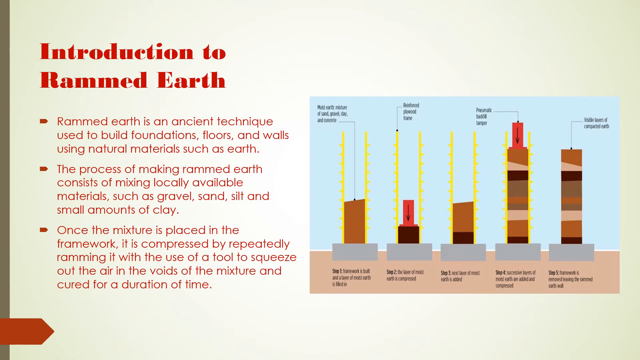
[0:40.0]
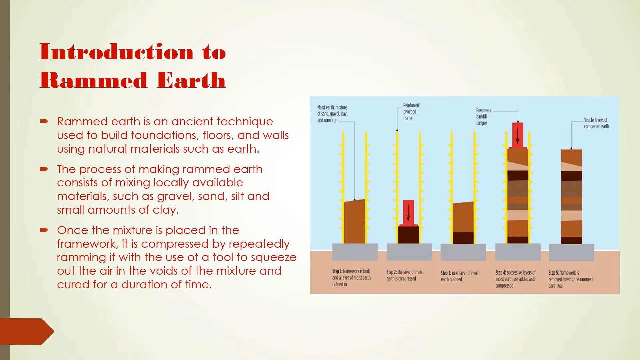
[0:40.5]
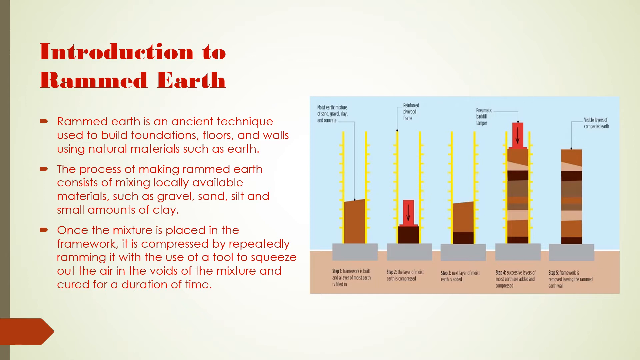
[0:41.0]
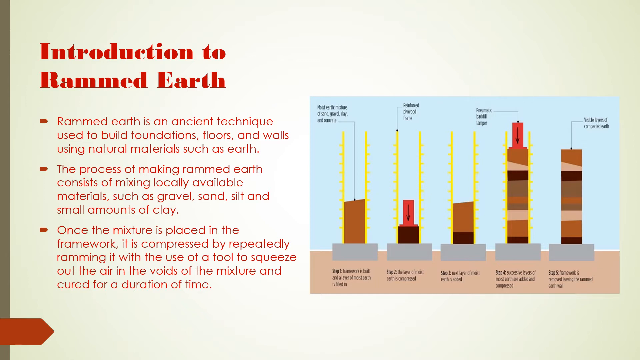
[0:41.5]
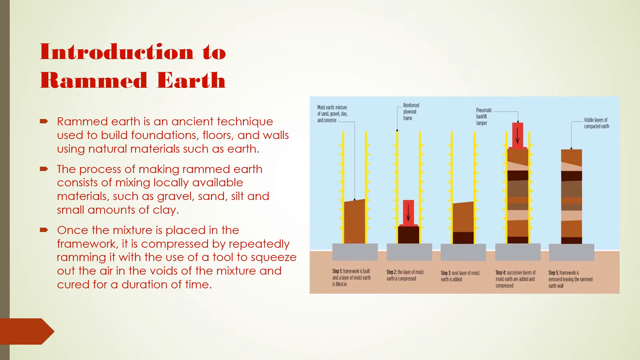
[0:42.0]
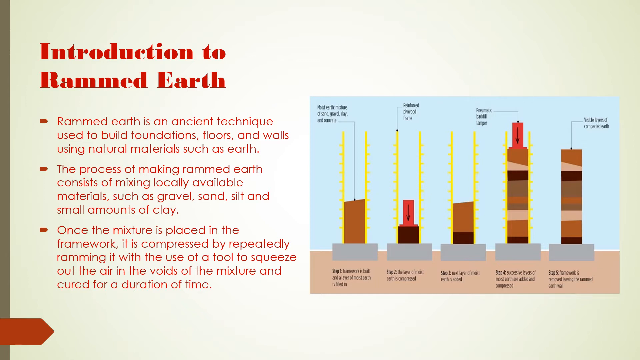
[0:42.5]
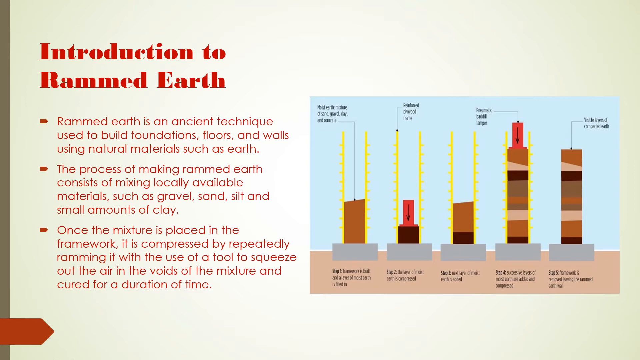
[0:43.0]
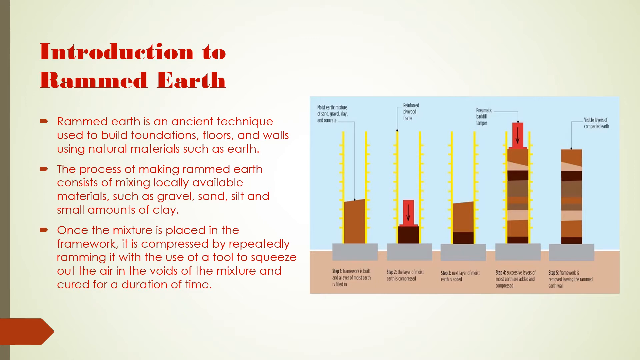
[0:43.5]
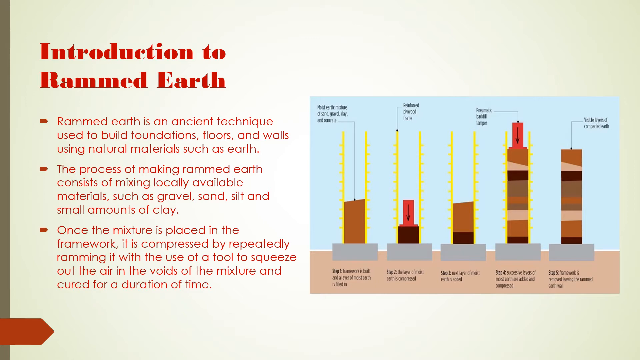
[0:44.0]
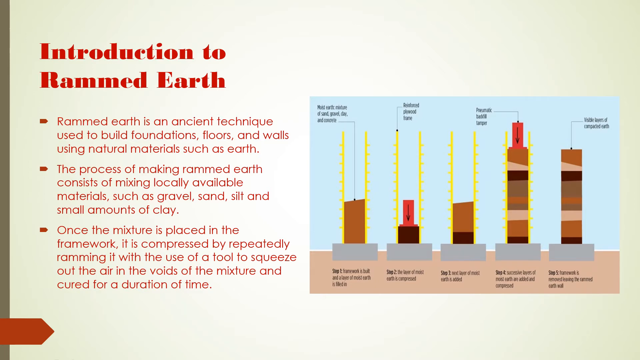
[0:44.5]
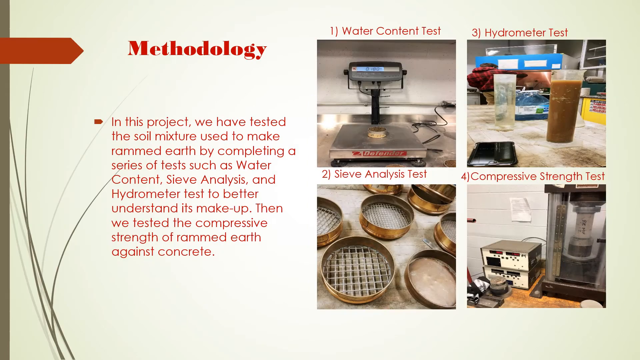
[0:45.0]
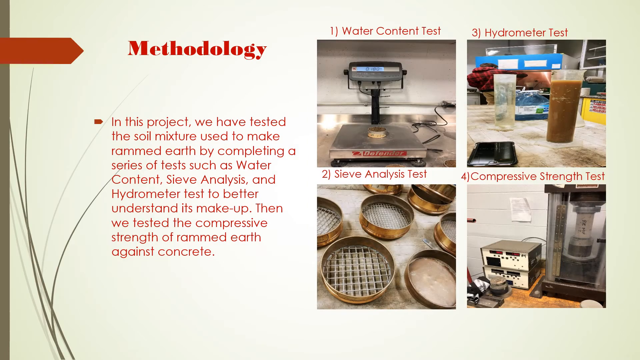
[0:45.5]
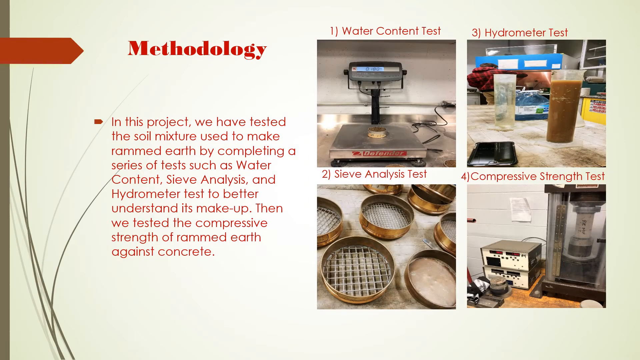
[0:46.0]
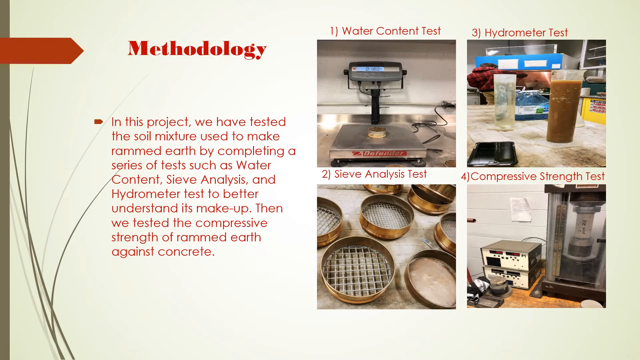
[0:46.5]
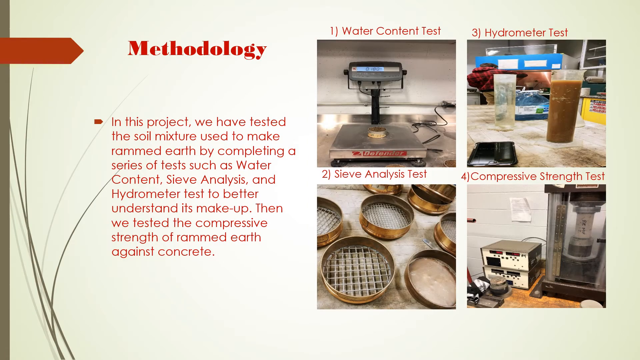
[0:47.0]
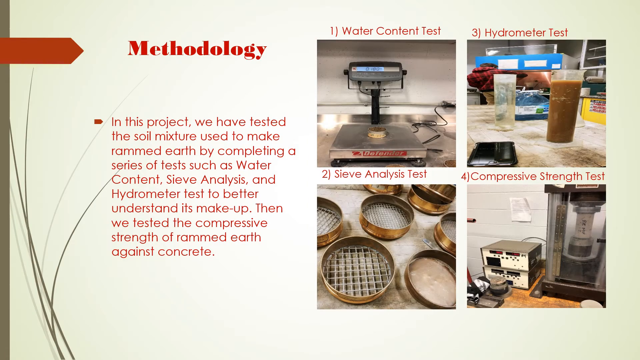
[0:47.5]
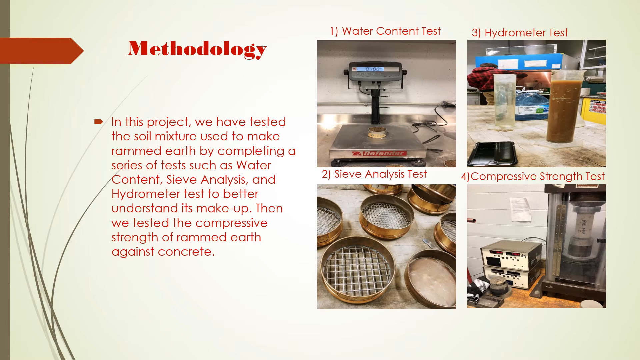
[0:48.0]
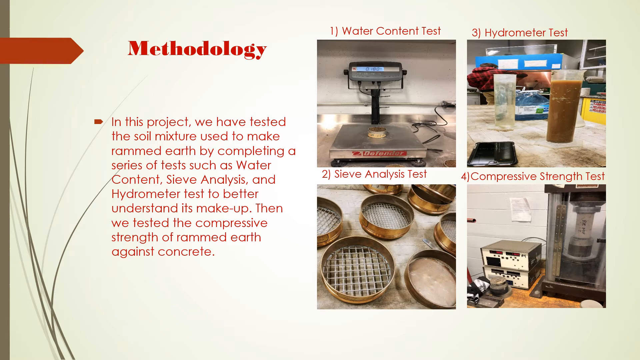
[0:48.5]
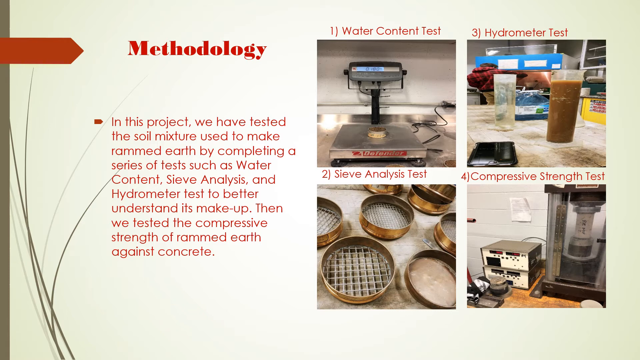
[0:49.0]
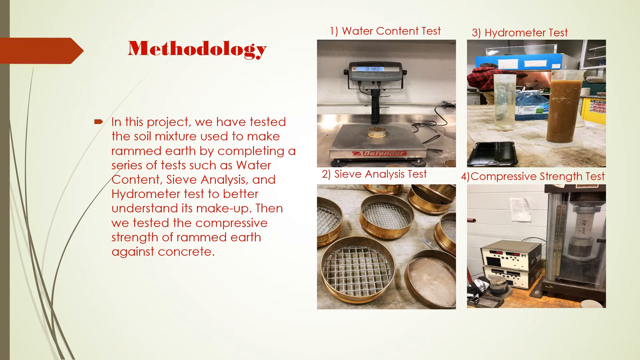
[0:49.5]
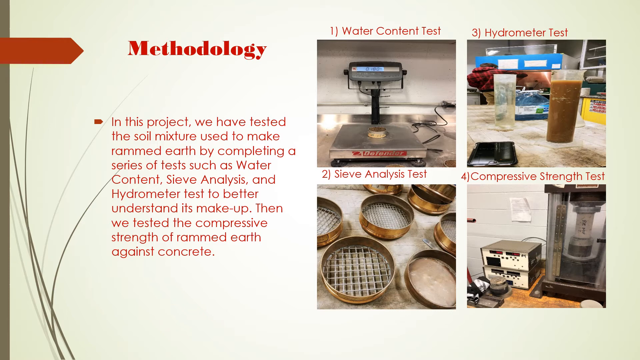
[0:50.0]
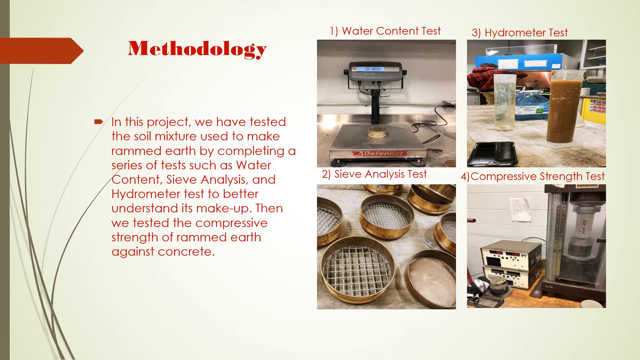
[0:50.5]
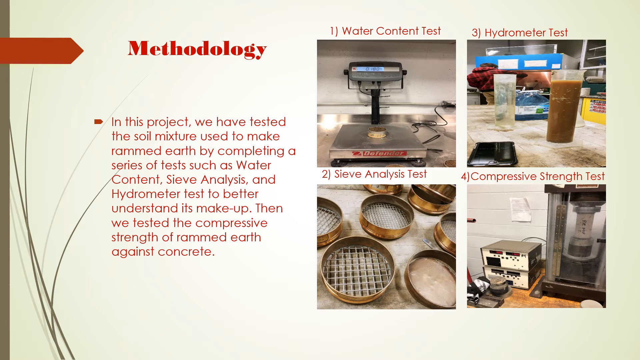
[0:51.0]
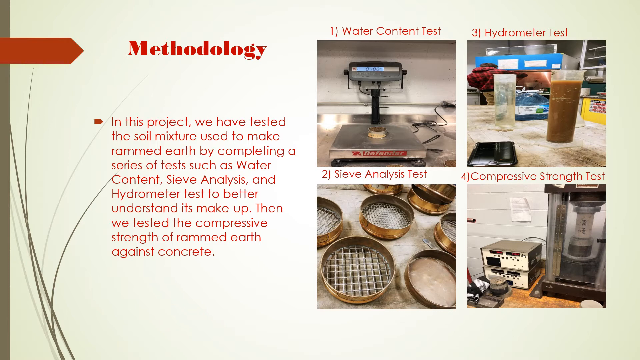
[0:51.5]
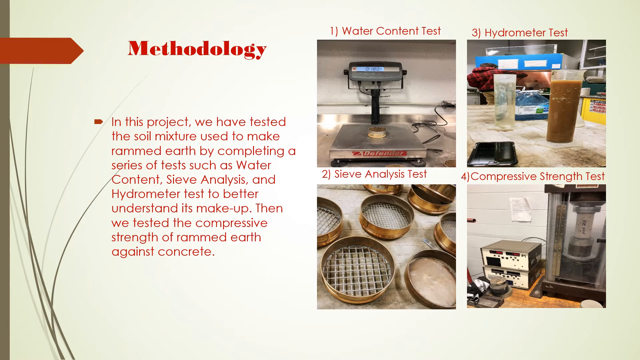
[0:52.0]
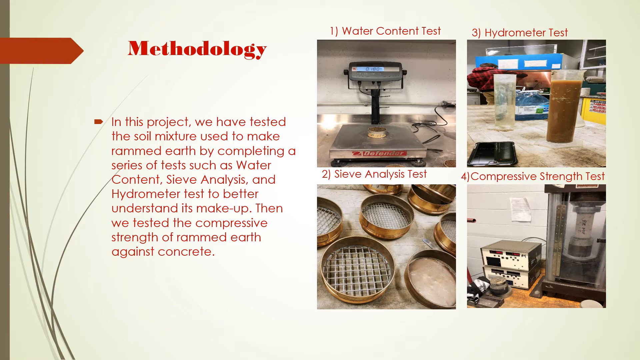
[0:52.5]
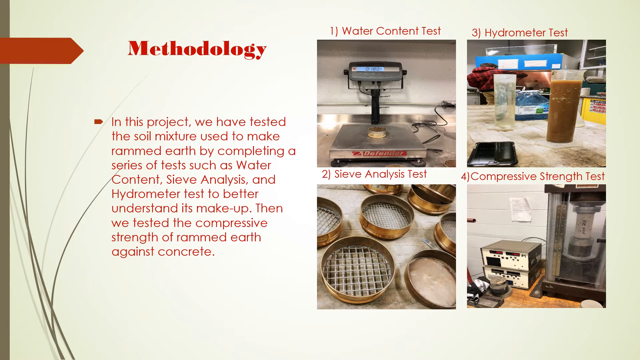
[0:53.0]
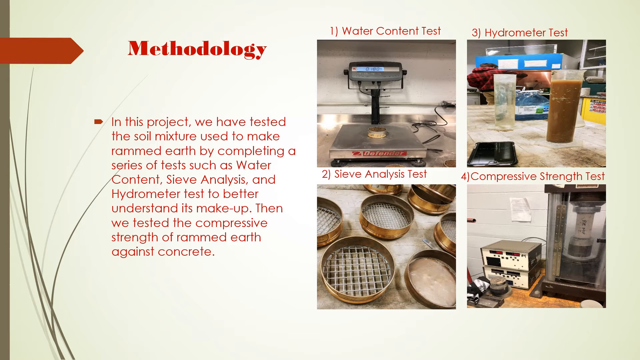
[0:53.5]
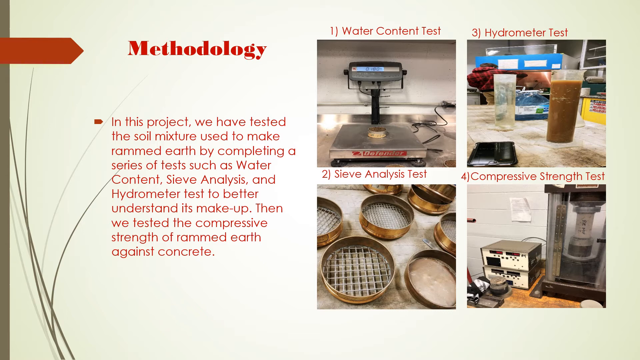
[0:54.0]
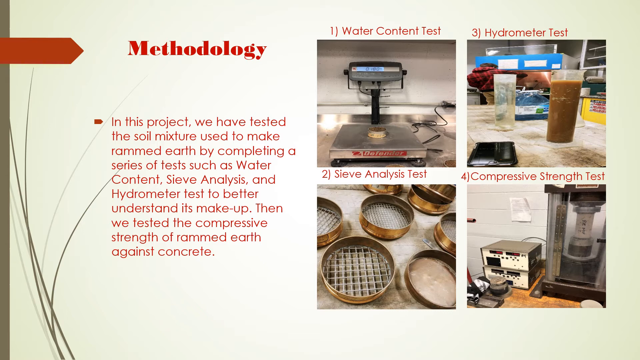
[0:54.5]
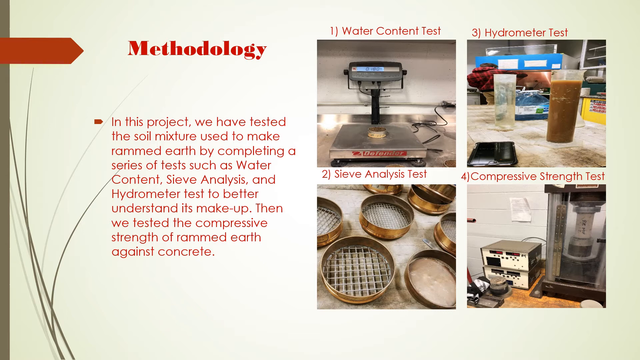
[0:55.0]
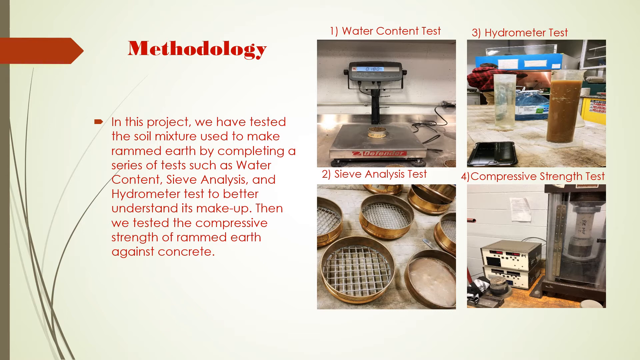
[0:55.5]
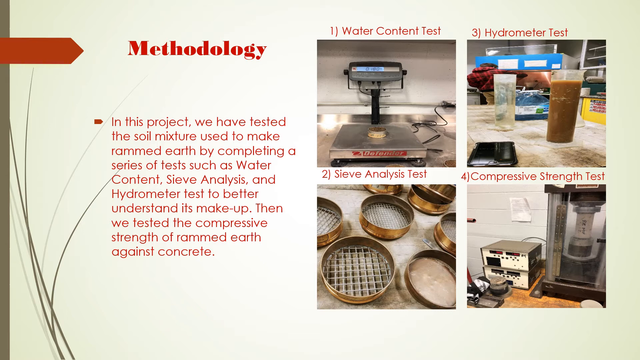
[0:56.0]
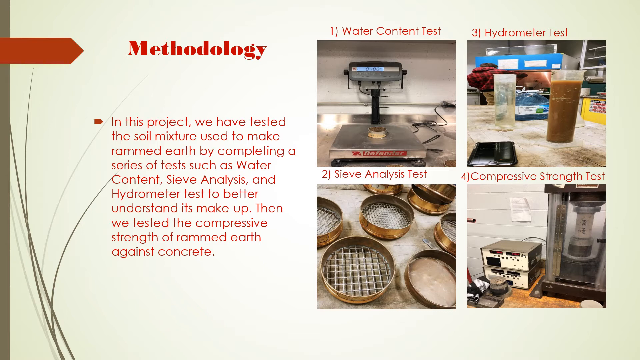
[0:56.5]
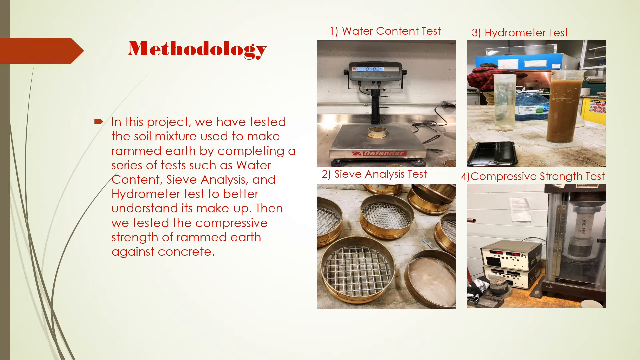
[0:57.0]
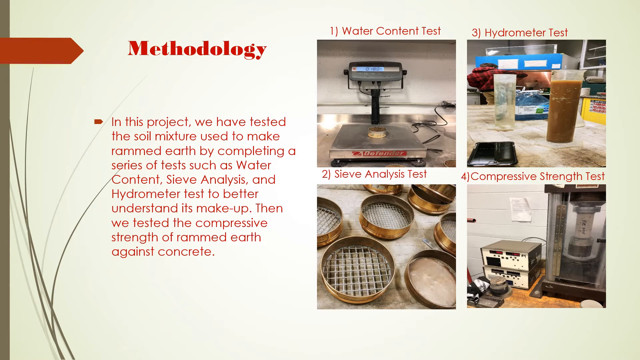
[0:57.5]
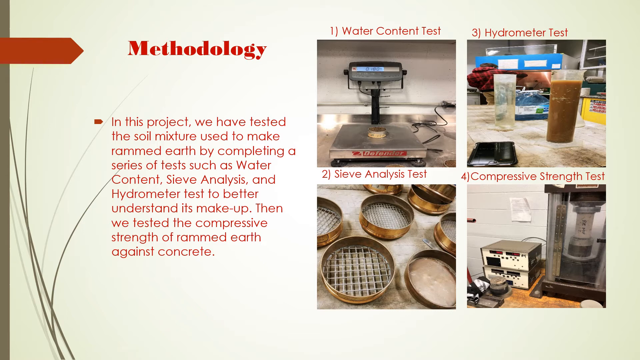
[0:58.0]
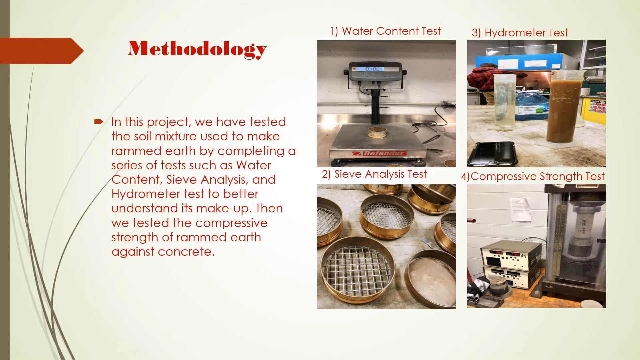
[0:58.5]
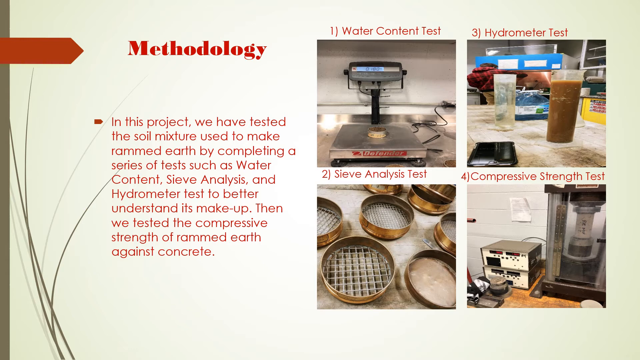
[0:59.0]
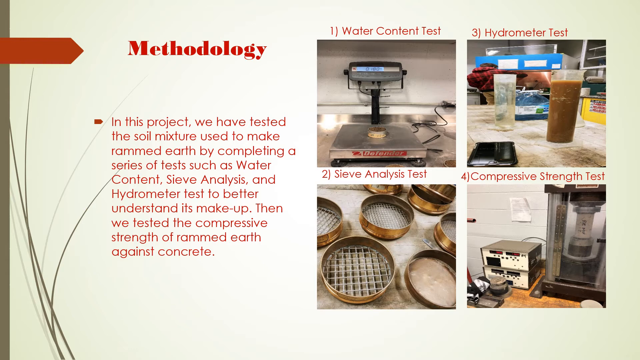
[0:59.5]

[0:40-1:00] The introduction to rammed earth slide, with its three bullet points and the diagram of how rammed earth is made on the right, is on screen first. It then changes to a slide with "methodology" in red text at the top. A single bullet point reads "in this project we will have tested the soil mixture used to make rammed earth by completing a series of tests such as water content, sieve analysis, and hydrometer tests to better understand its makeup. Then we tested the compressive strength of rammed earth against concrete." On the right side are four pictures. The first has the text "water content test" above it and shows what looks to be a scale with something on it. Below it, the second is labeled "sieve test analysis" and shows four or five round sifters with different sized grates. The third is labeled "hydrometer test" and contains two pictures, one empty and one full of a brown liquid. The fourth shows two unidentified machines on a desk with the text "compressive strength test" above it.